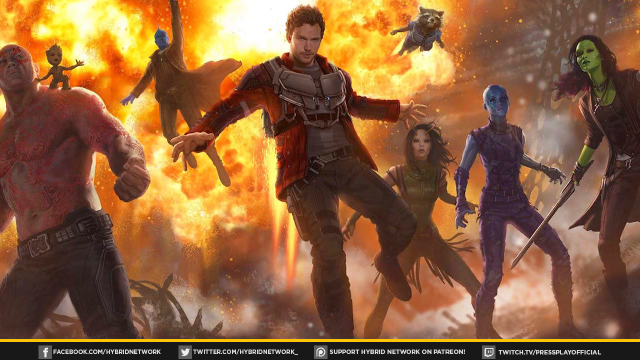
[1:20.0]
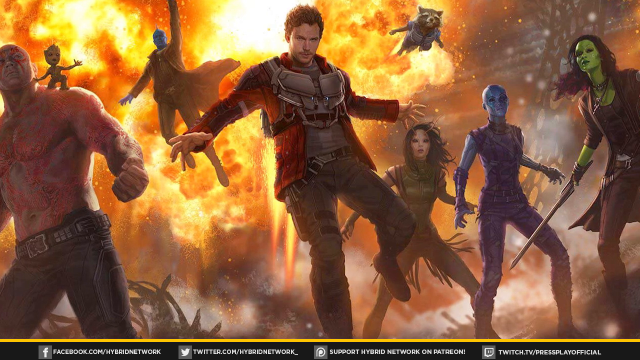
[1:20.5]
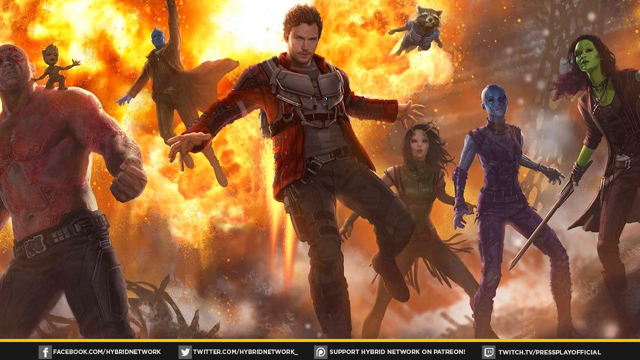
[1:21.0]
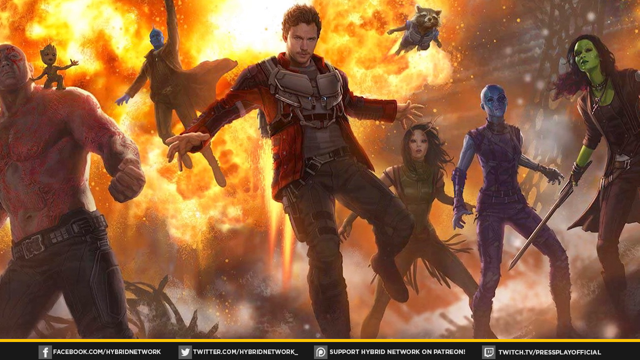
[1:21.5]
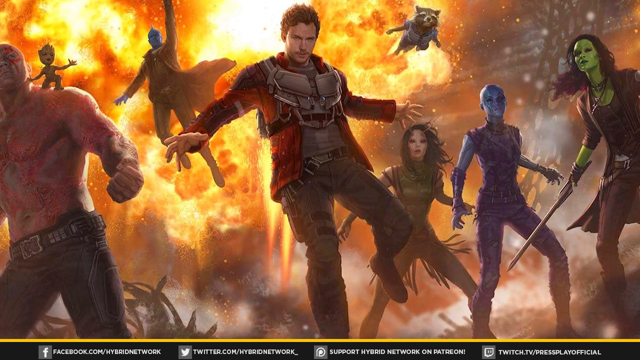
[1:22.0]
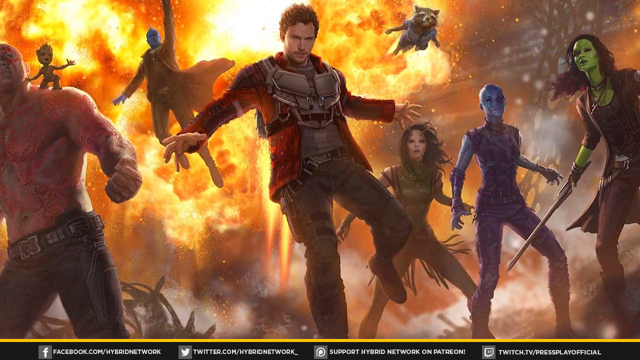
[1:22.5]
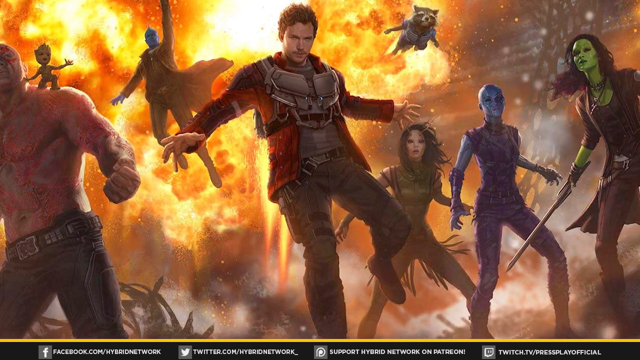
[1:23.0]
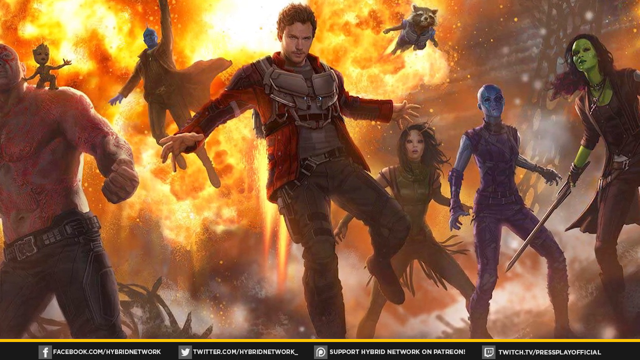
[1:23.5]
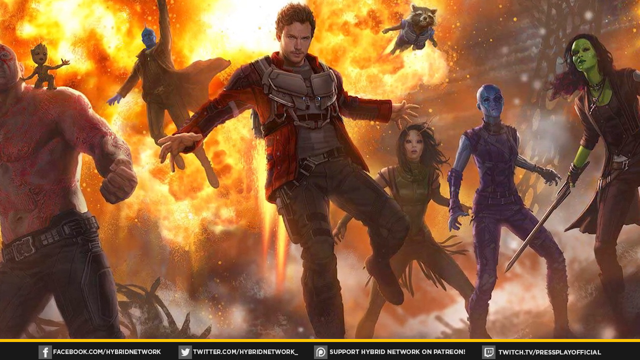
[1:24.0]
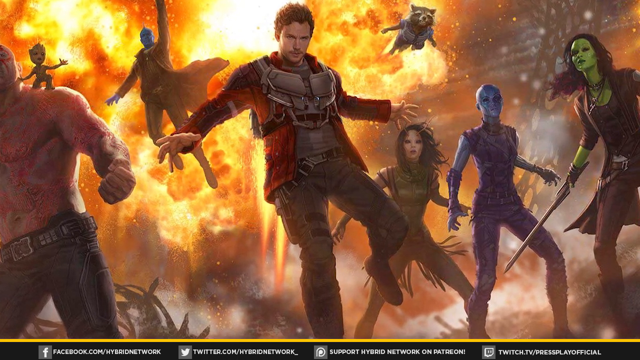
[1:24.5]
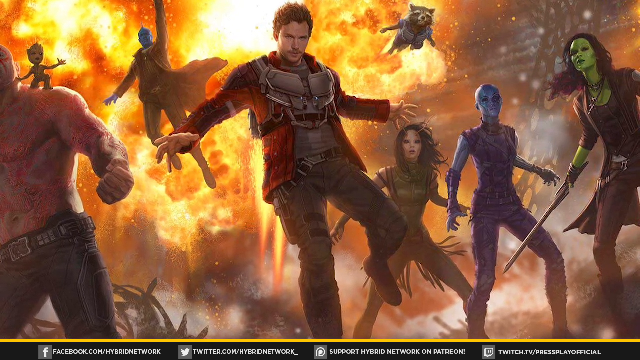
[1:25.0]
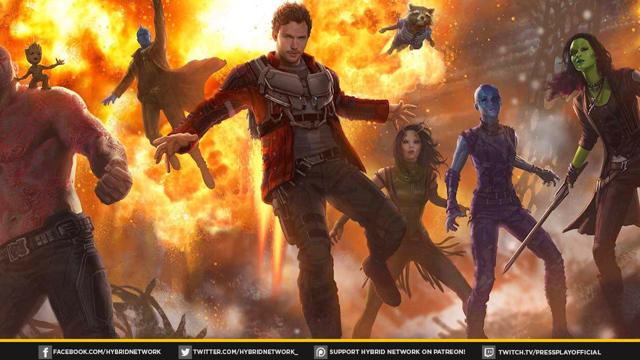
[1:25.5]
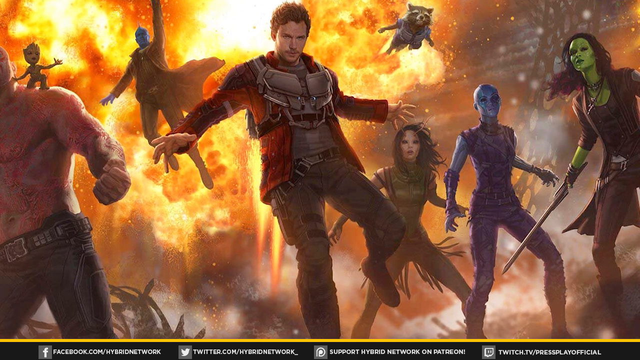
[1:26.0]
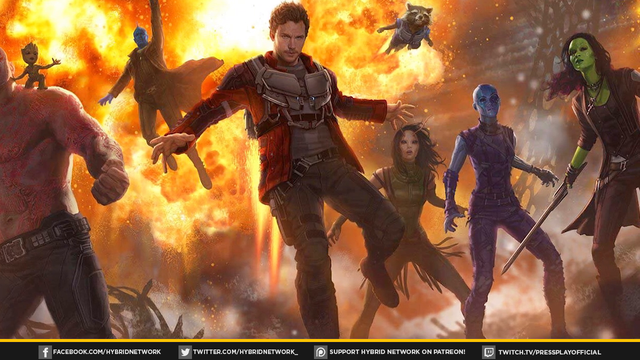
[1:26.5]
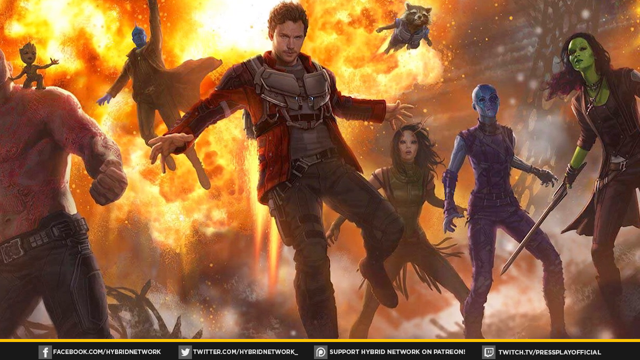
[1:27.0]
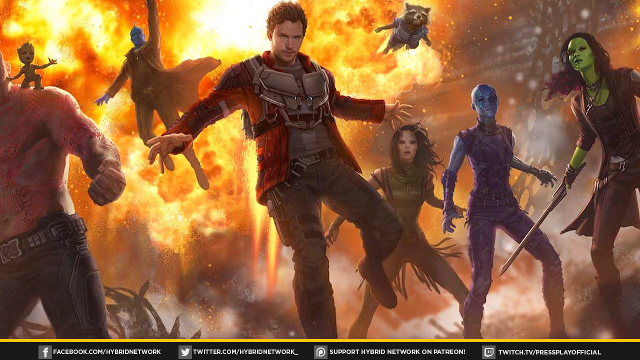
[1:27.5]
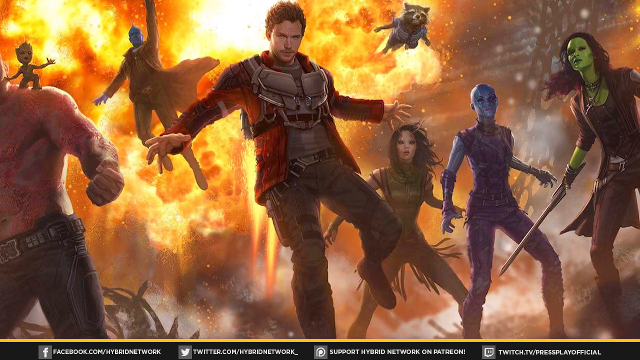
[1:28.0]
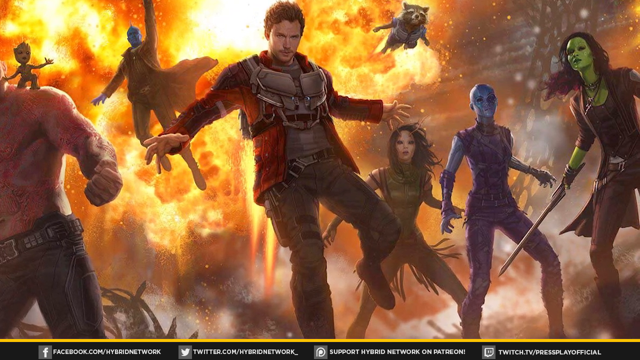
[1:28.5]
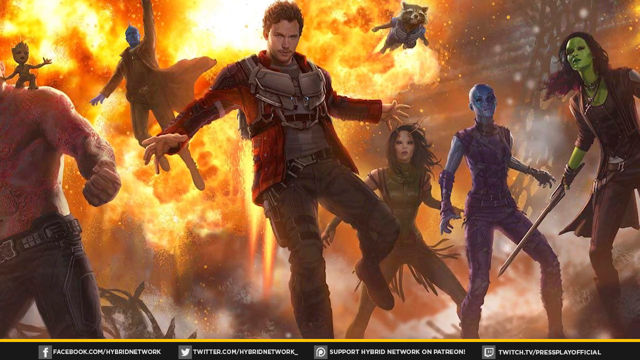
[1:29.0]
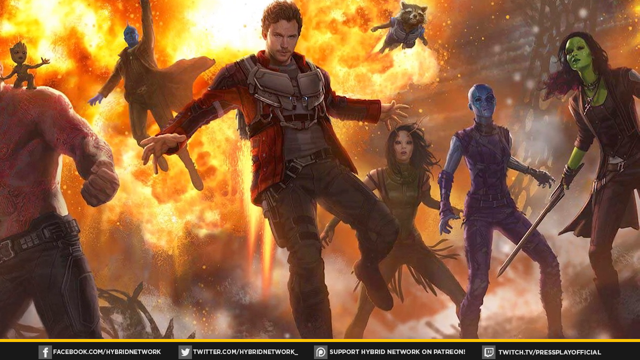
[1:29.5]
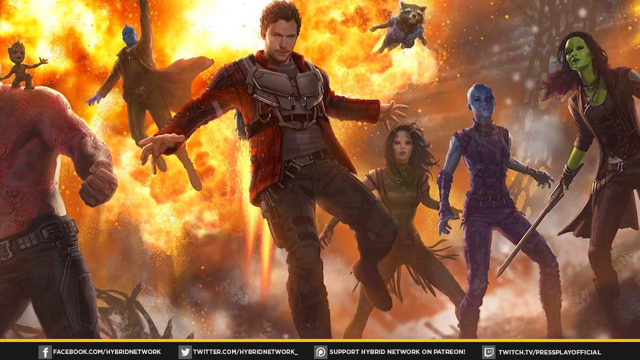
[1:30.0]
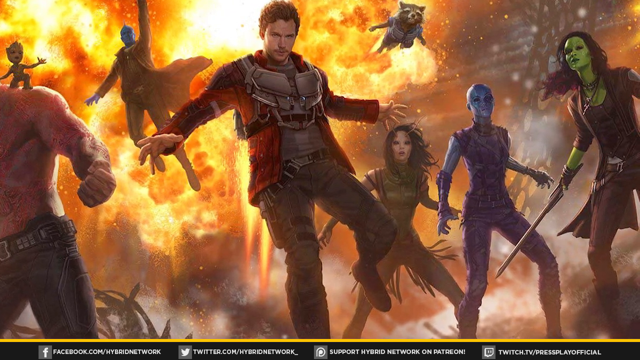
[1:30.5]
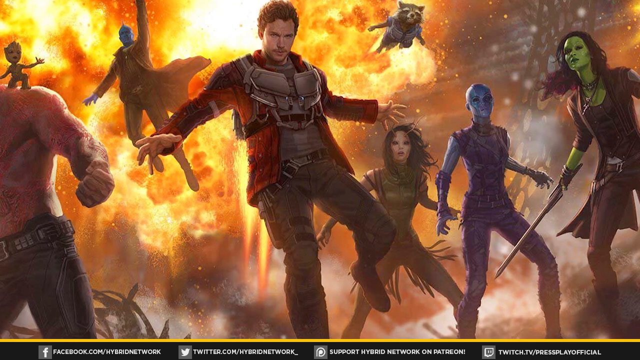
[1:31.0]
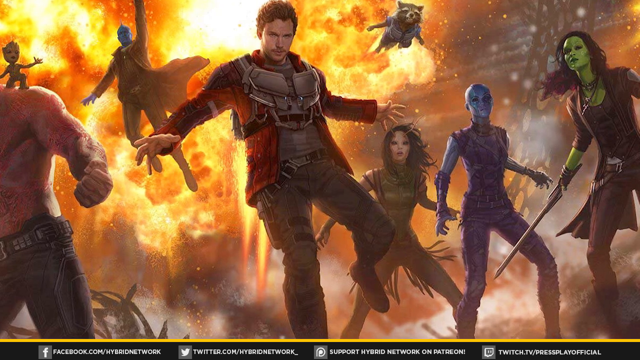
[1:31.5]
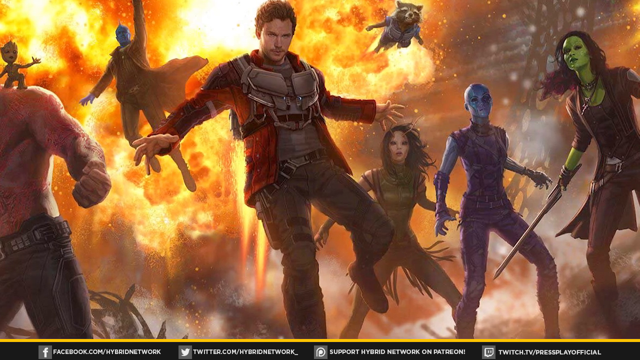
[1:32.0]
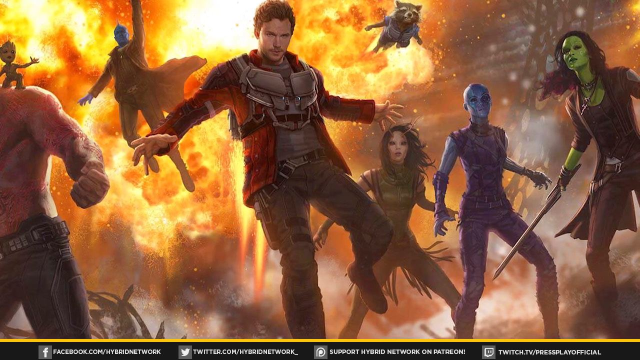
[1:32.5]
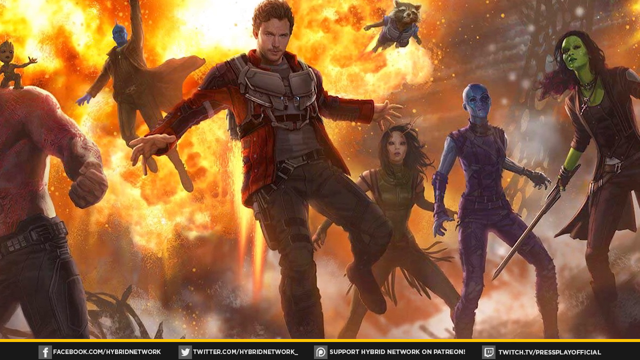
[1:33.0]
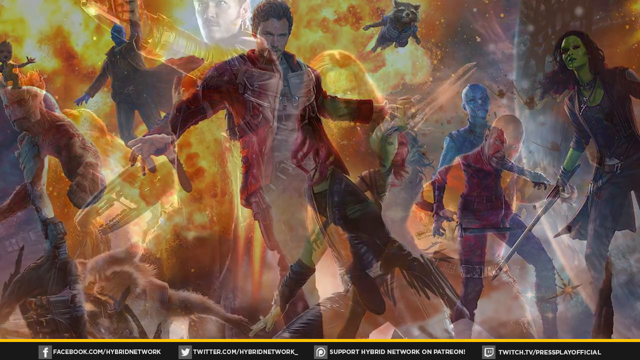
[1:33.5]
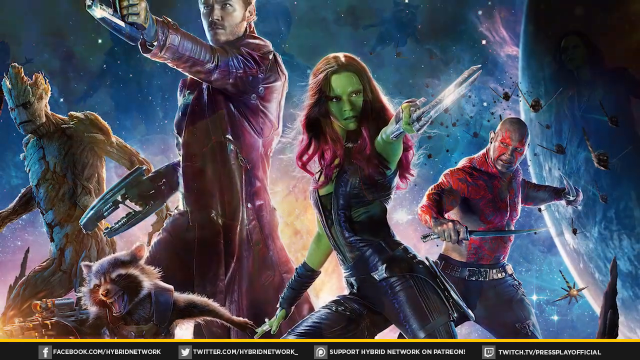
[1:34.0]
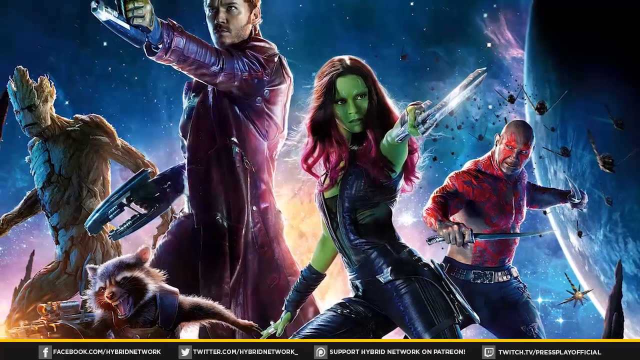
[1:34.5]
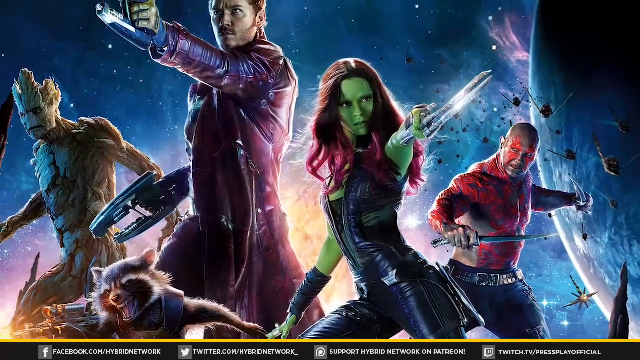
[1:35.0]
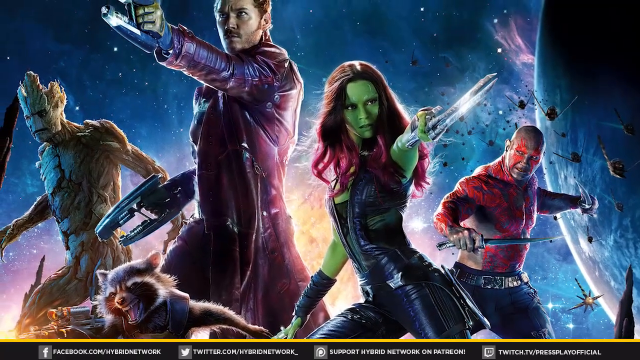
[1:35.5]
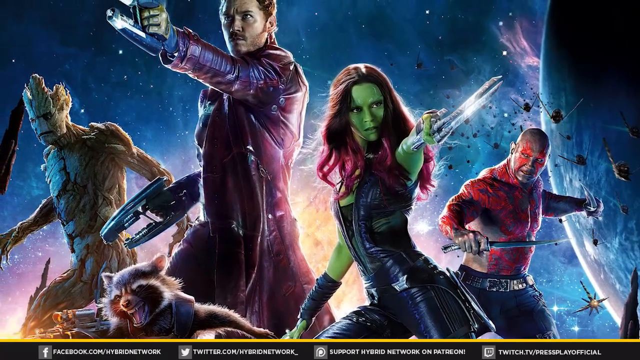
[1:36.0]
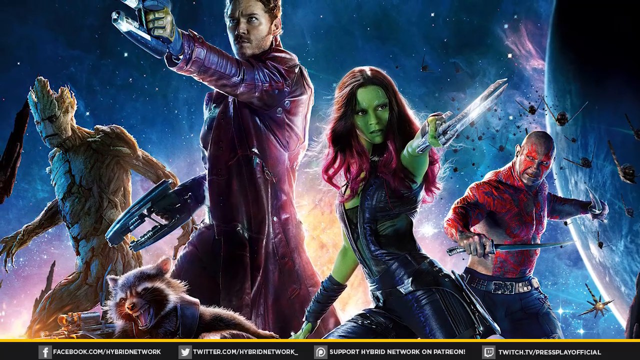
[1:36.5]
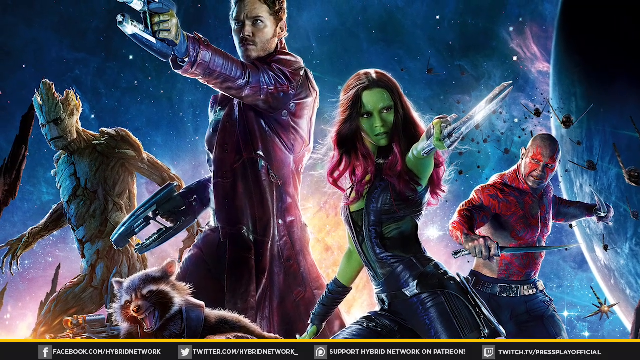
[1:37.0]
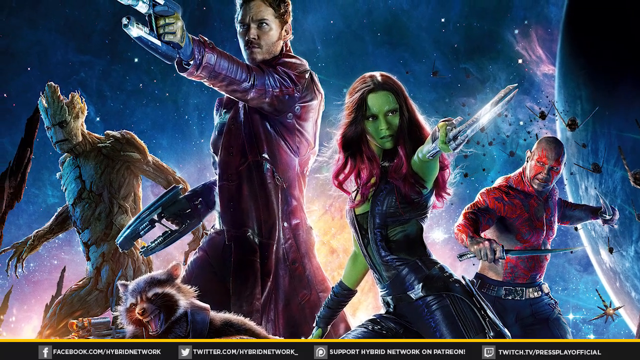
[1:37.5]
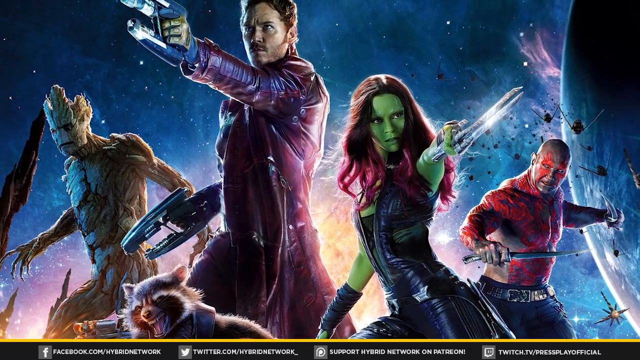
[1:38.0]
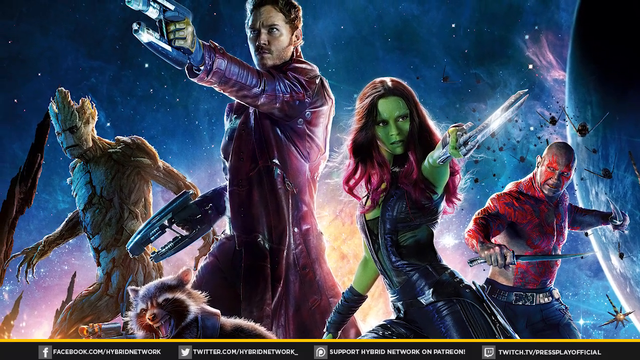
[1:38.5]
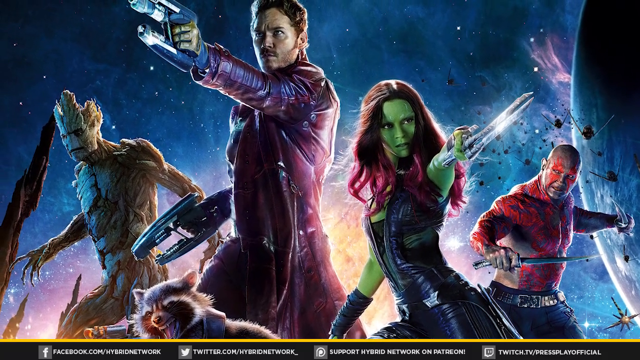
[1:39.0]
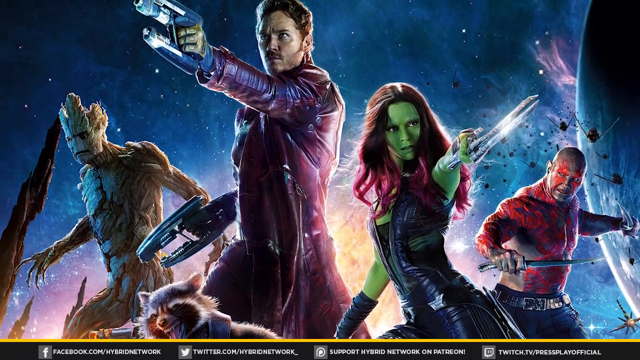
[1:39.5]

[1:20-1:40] The video appears to be about superhero movies, possibly comic books as well. In the center of the frame are Guardians of the Galaxy characters. Toward the center of the image is what looks like Chris Pratt's character, with a blue-faced character in the background and a fire explosion. To the right of Chris Pratt's character is Rocket the Raccoon, with a green-vested character with black hair underneath Rocket. A blue and purple character is coming over, and at the far right is a green female character with long hair. Toward the left, next to the blue character being hit by the explosion, is the big muscular character with Groot resting on that character's shoulders. They all look very fierce, there is a huge explosion, and some of them hold weapons. The camera kind of pushes in toward the side where the green character is and lingers there. A different image shows some of the same characters: what looks like the Raccoon, Groot, Chris Pratt's character and the green-skinned character with flowing hair, fighting, with a muscular guy toward the right. Some of them have futuristic weapons, and the muscle guy appears to have a knife. Behind them is a blue and purple space background with stars, and a planet is to the right. Chris Pratt's character is kind of looking off screen, holding spacey, futuristic-looking weapons, one in each hand. The camera continues to pan.